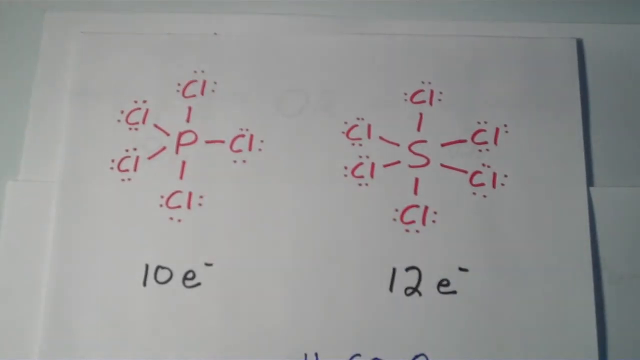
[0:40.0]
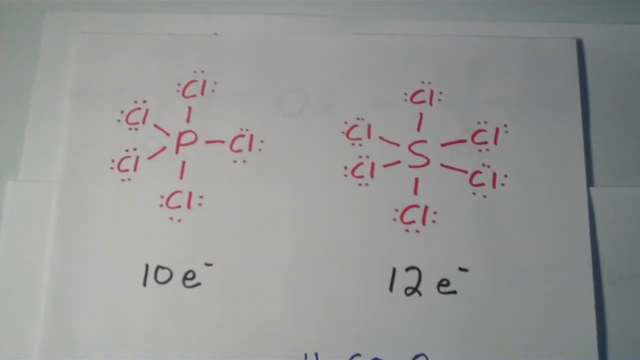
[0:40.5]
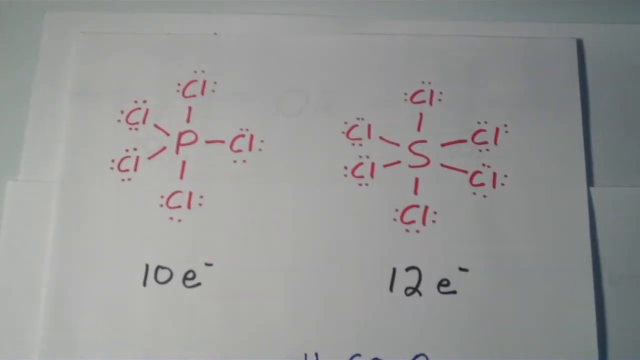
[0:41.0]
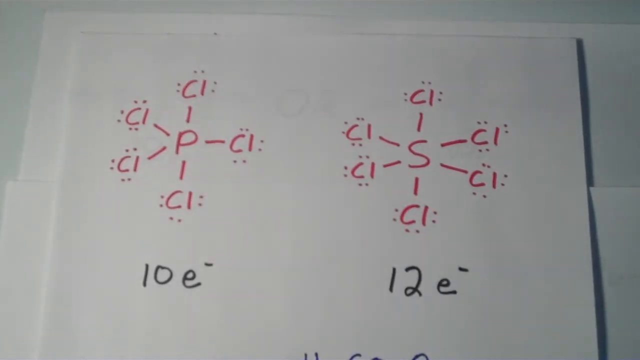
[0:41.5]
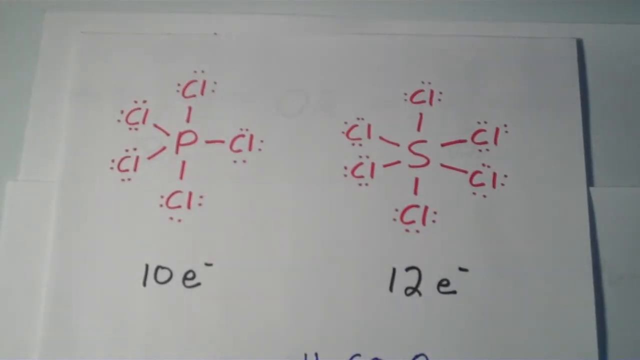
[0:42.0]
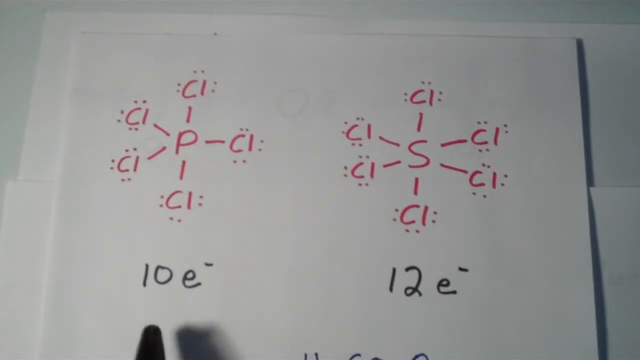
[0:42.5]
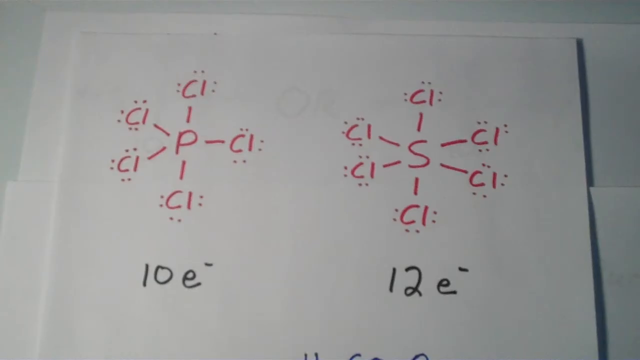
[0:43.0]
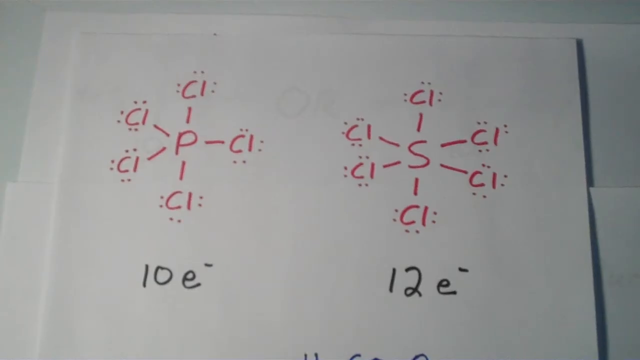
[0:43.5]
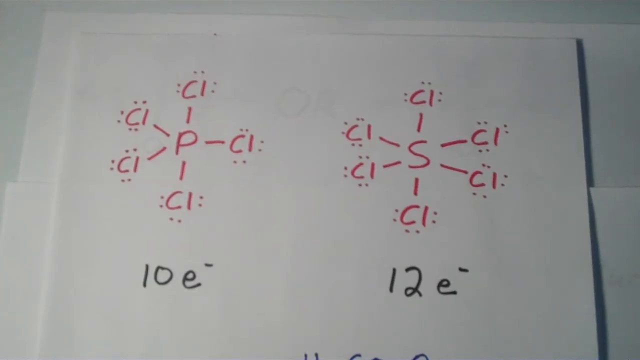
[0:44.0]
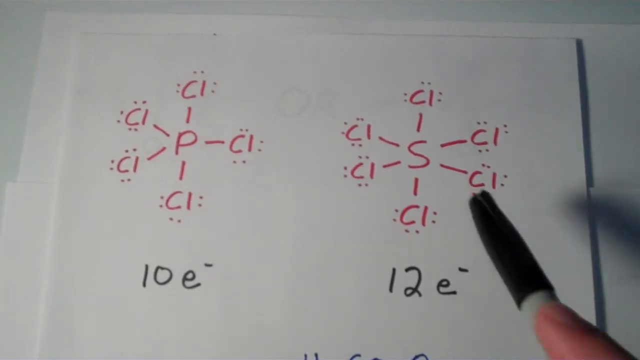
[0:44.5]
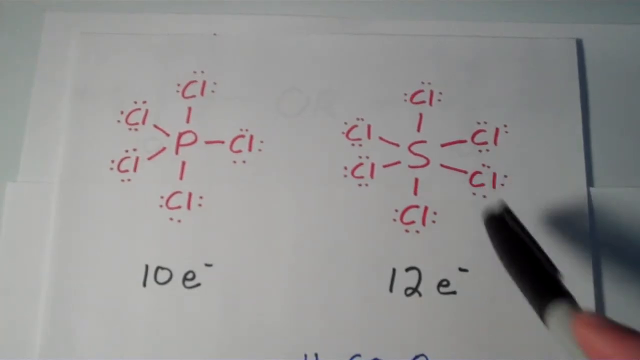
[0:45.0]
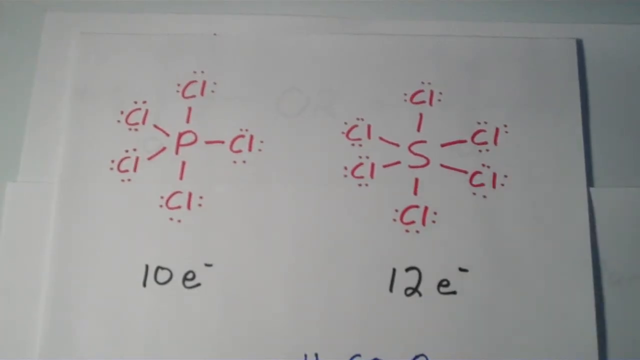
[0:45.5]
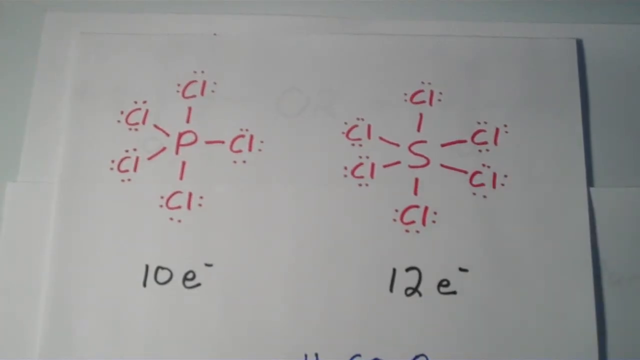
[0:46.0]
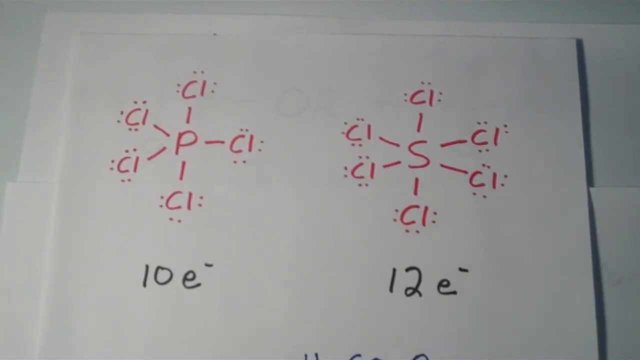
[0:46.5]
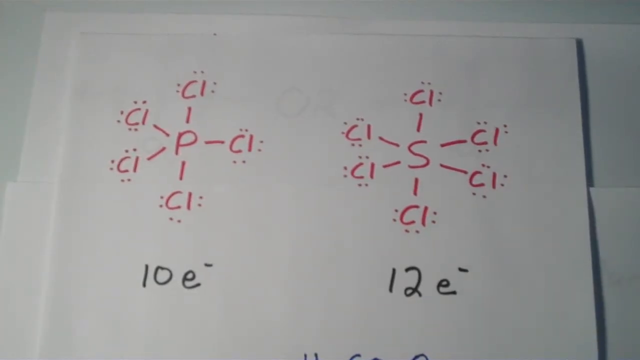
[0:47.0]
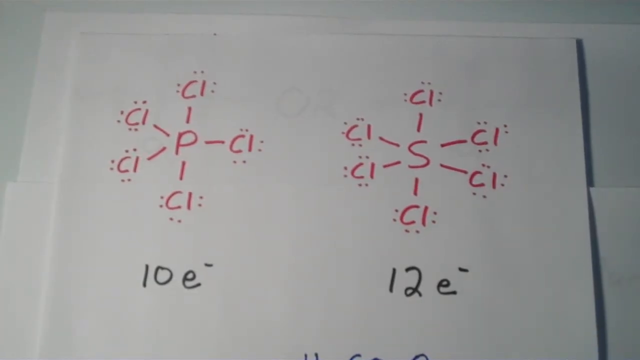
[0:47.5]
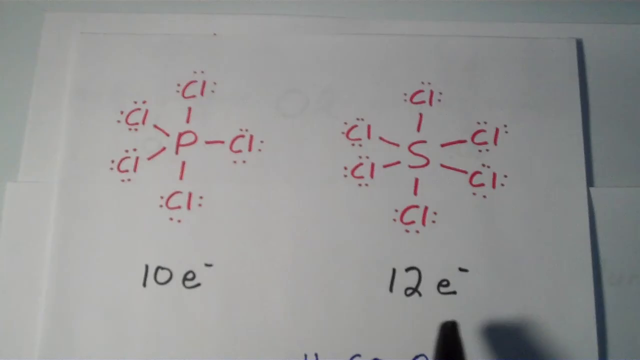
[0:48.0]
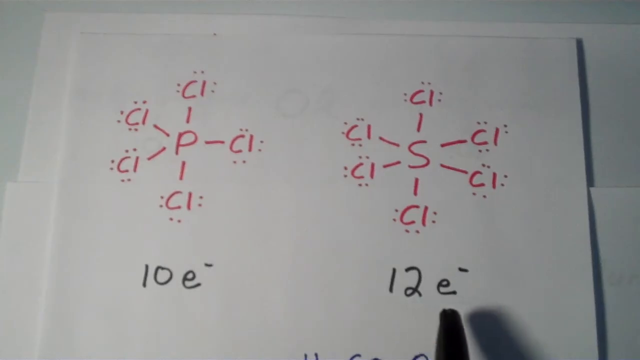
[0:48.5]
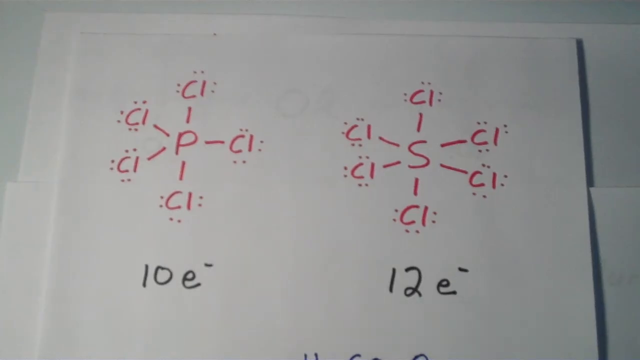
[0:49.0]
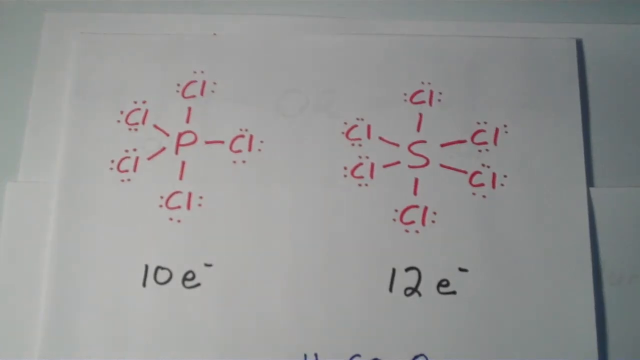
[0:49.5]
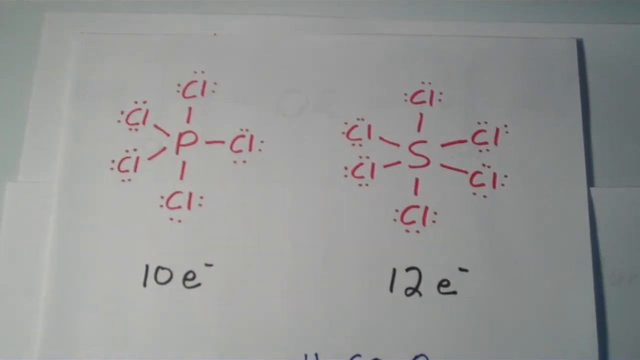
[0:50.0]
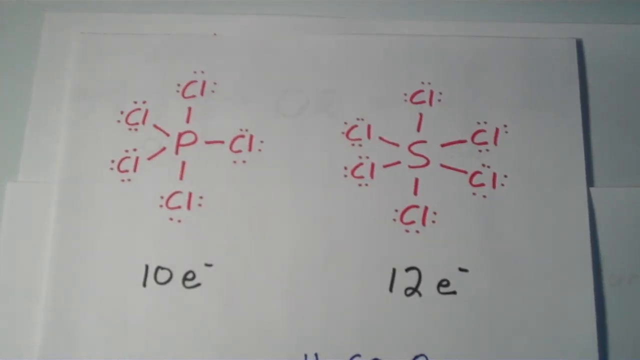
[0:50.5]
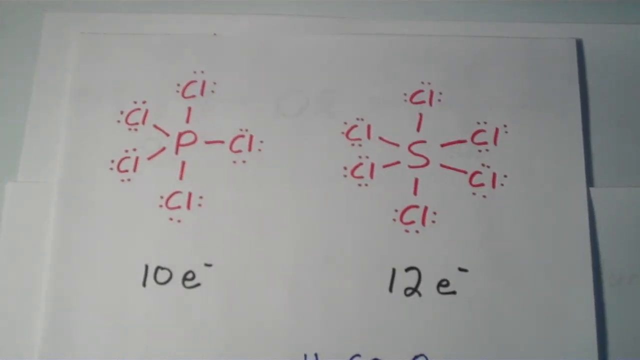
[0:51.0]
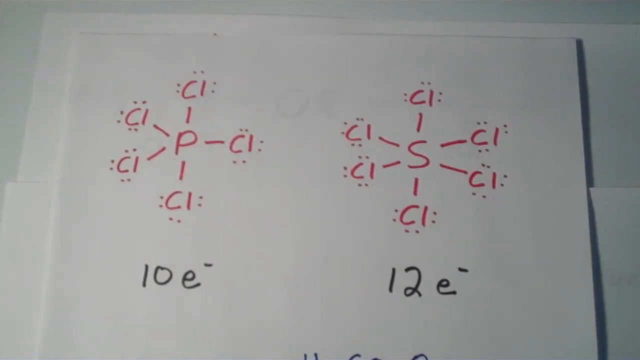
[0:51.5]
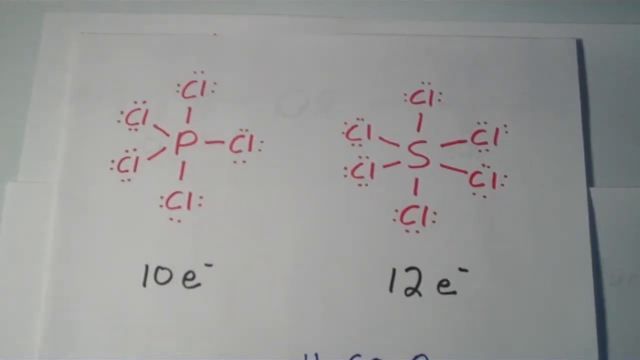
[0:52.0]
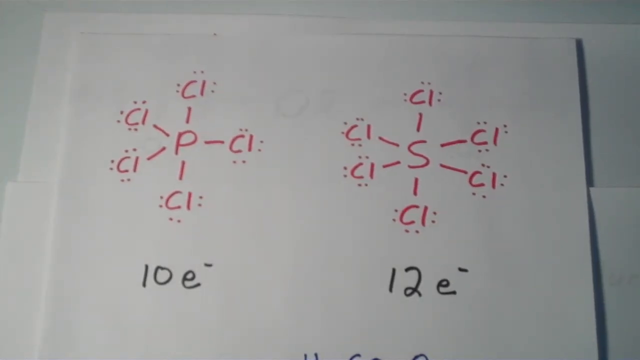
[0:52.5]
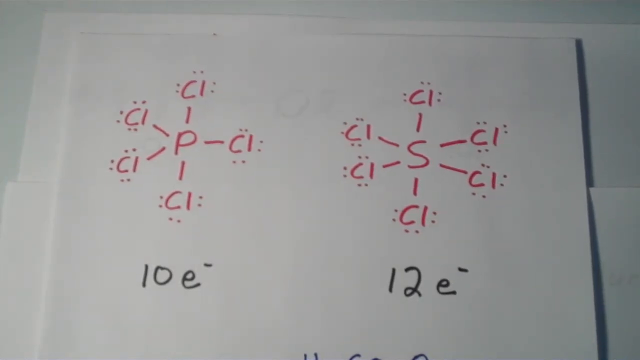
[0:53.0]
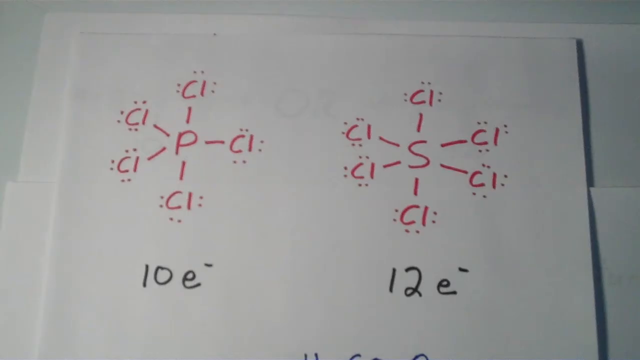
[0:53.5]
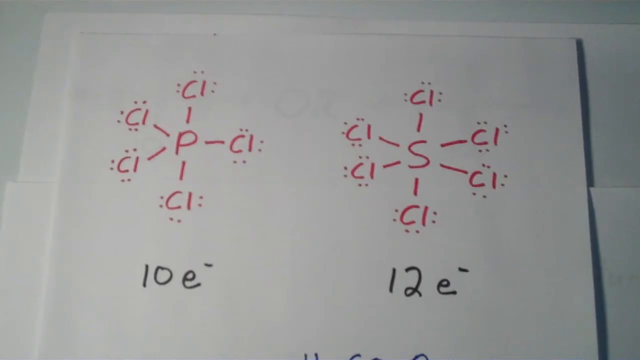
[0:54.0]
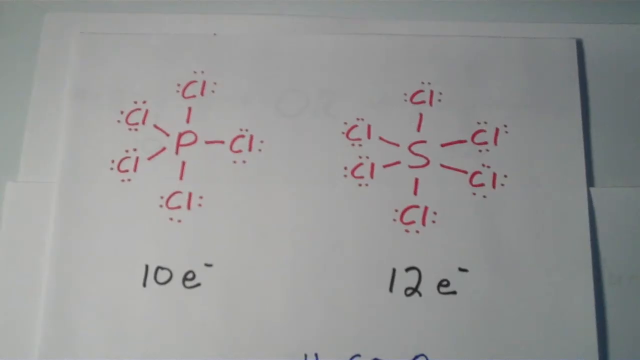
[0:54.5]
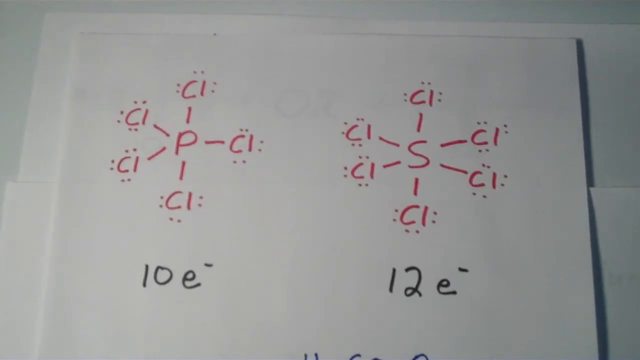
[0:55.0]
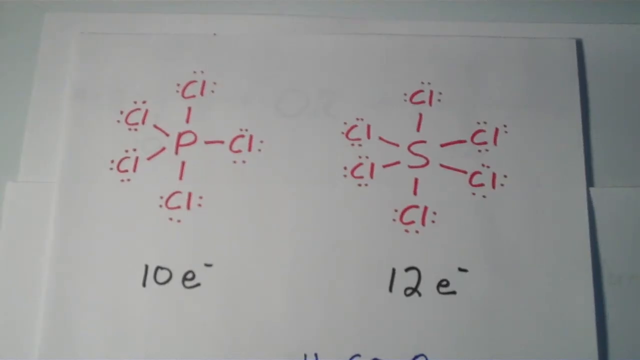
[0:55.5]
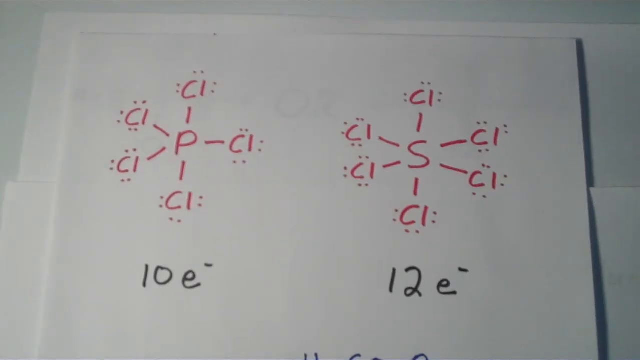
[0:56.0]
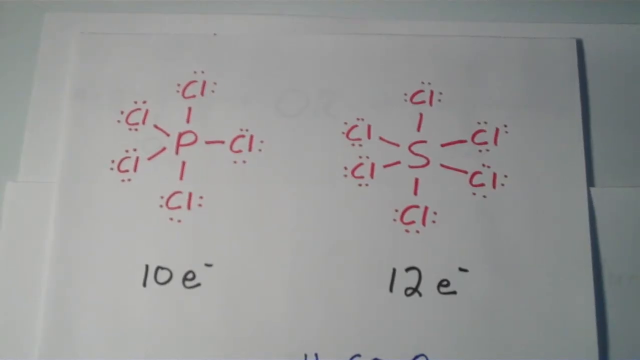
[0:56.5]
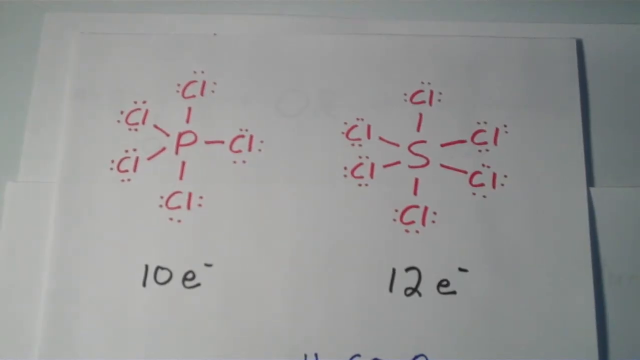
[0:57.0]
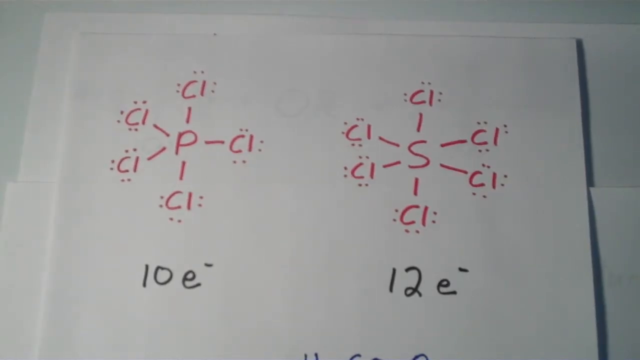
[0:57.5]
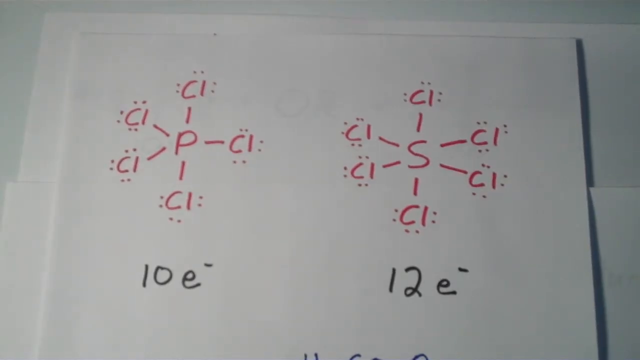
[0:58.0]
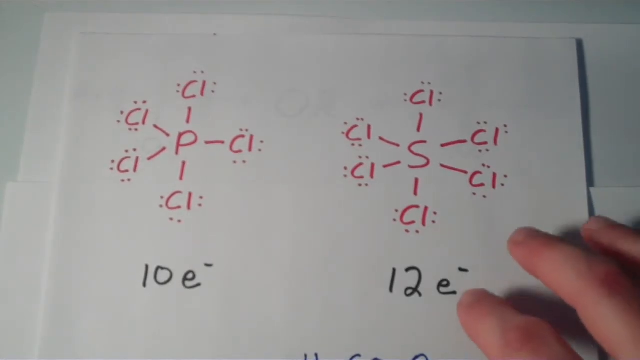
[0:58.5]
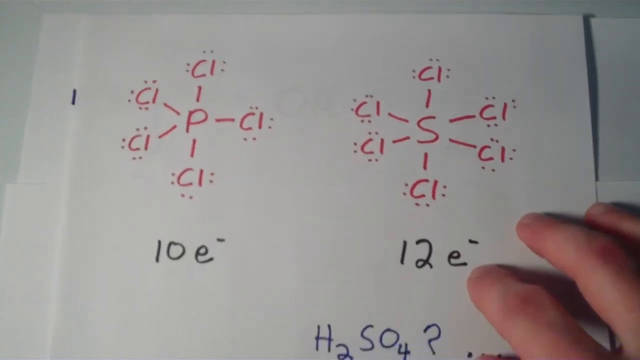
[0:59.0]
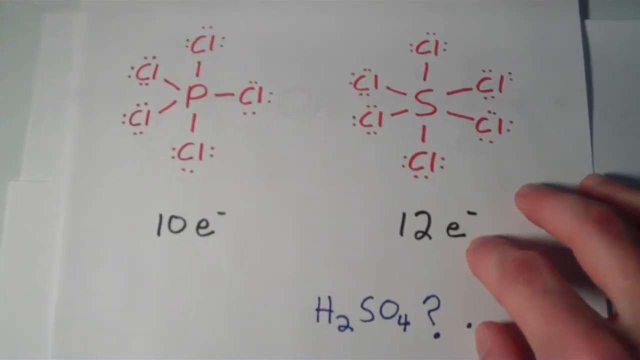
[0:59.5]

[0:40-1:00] The same Lewis structure drawing remains on screen. Both molecules are drawn in red ink, and the electron counts are written in black ink: phosphorus pentachloride on the left has 10 electrons, and sulfur hexafluoride on the right has 12. The instructor points to the sulfur hexafluoride molecule and then points back and forth between the two molecules. The instructor then moves the page up to show the formula "H2SO4" followed by a question mark.